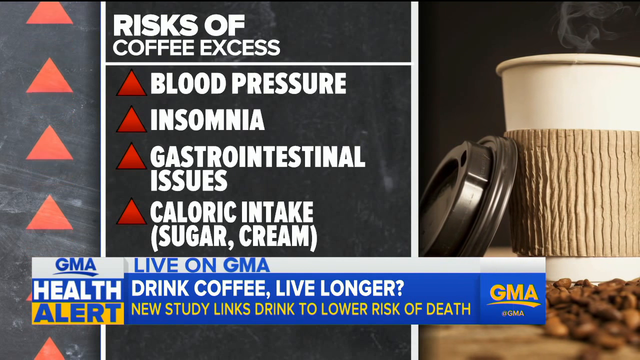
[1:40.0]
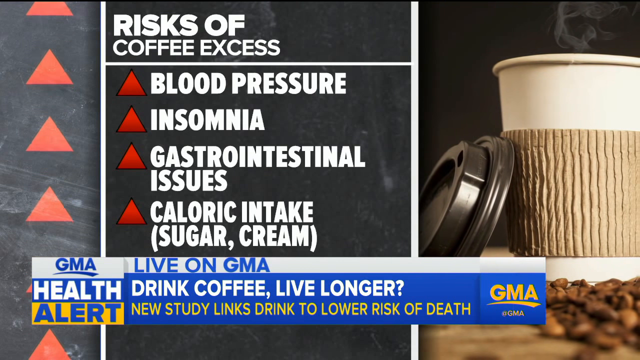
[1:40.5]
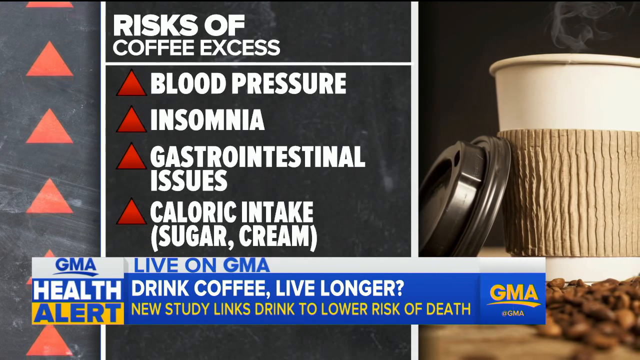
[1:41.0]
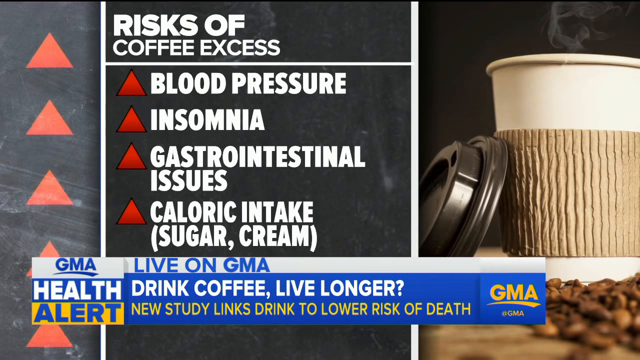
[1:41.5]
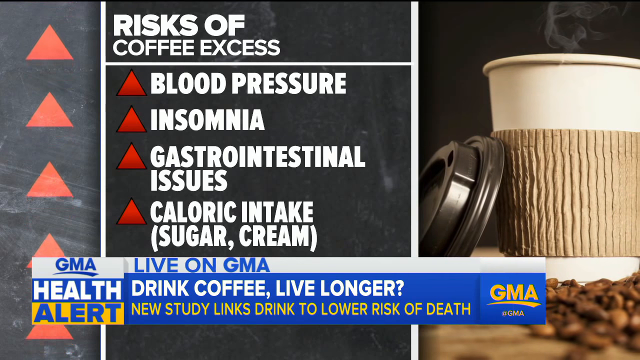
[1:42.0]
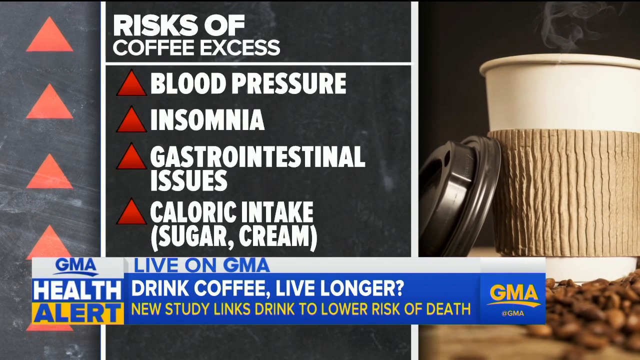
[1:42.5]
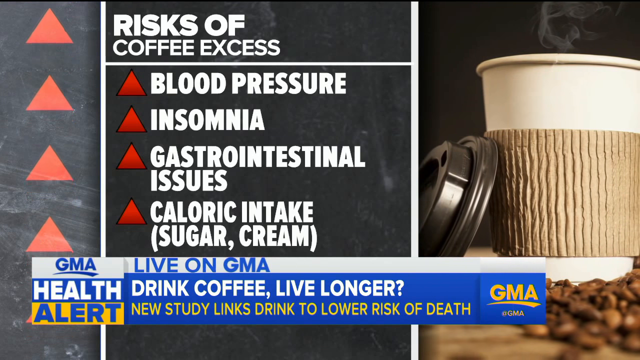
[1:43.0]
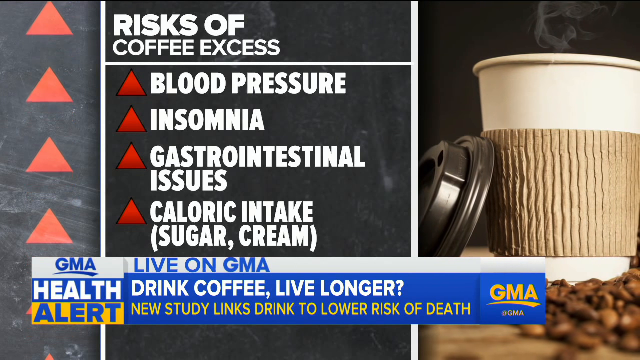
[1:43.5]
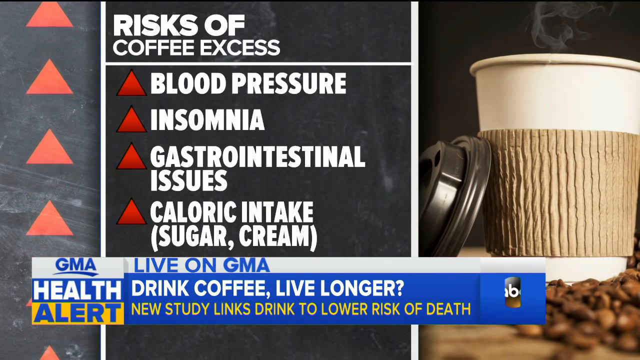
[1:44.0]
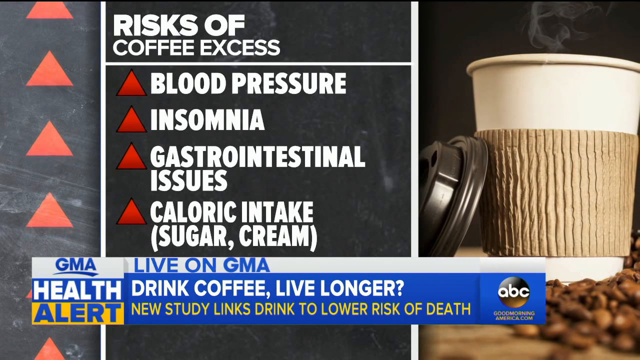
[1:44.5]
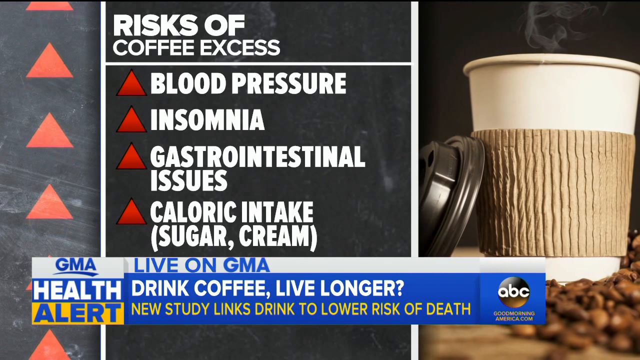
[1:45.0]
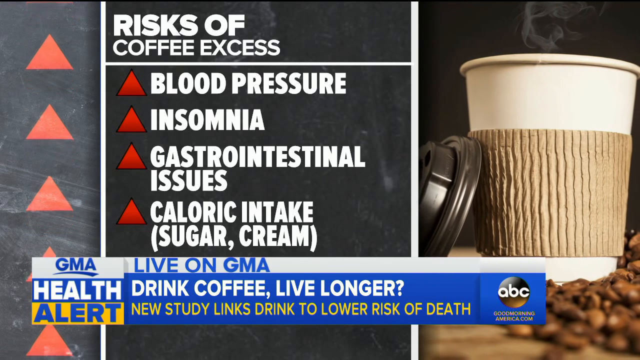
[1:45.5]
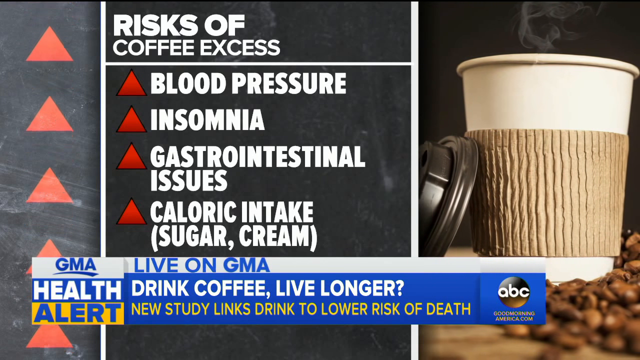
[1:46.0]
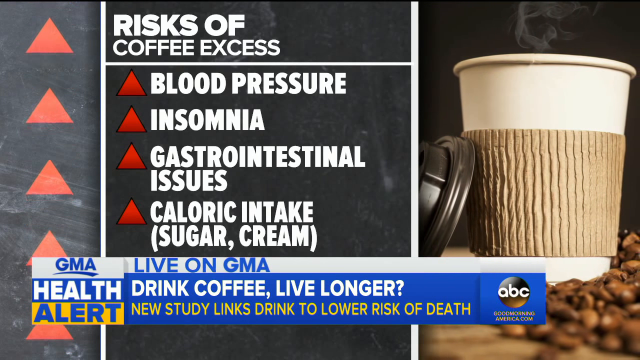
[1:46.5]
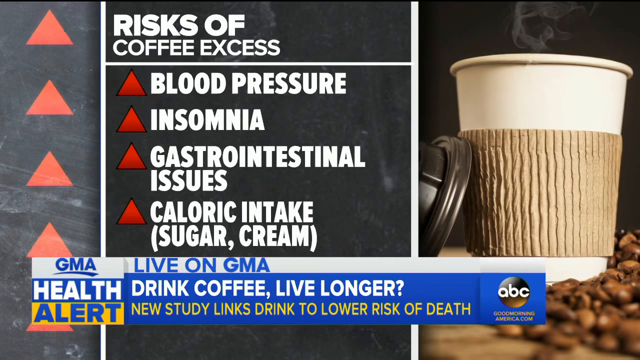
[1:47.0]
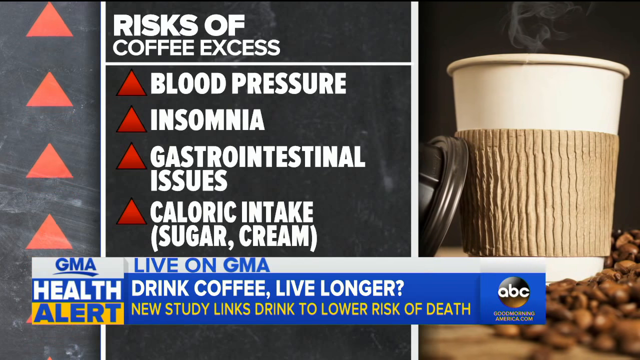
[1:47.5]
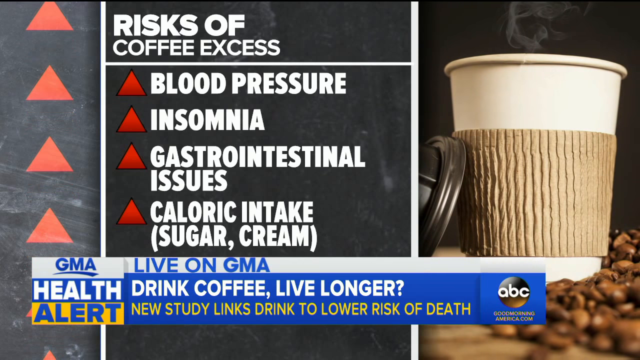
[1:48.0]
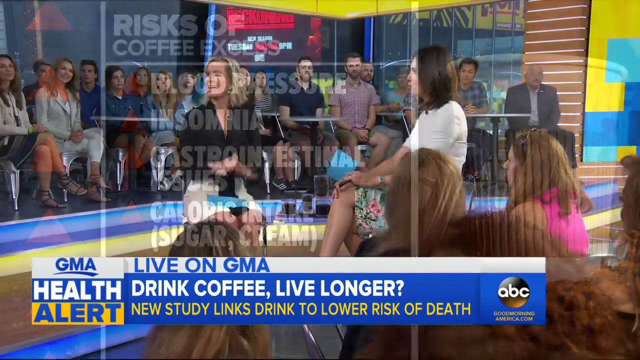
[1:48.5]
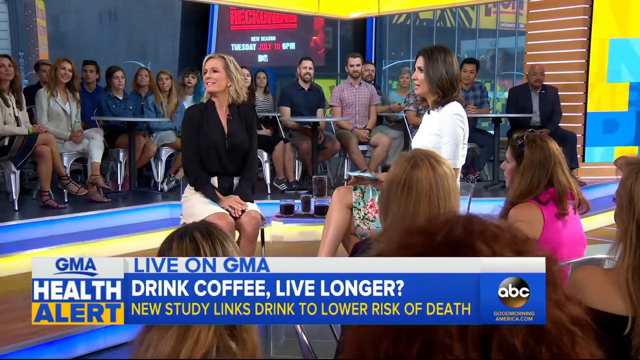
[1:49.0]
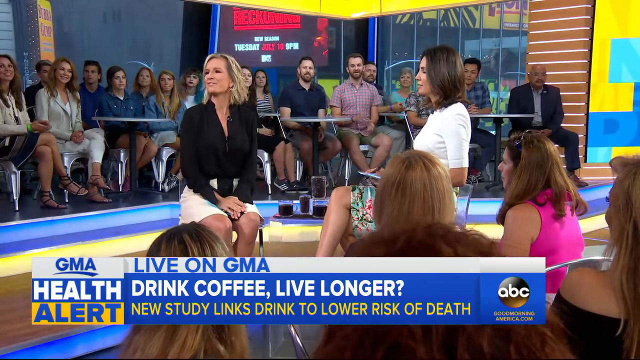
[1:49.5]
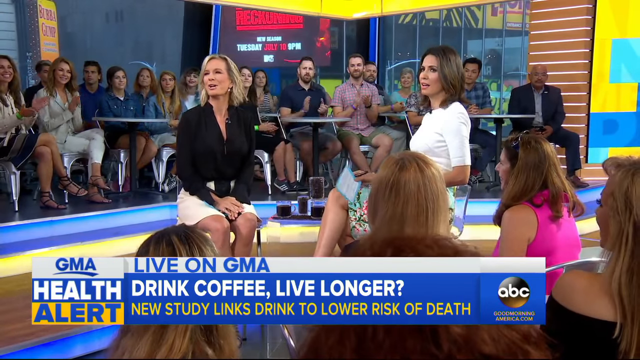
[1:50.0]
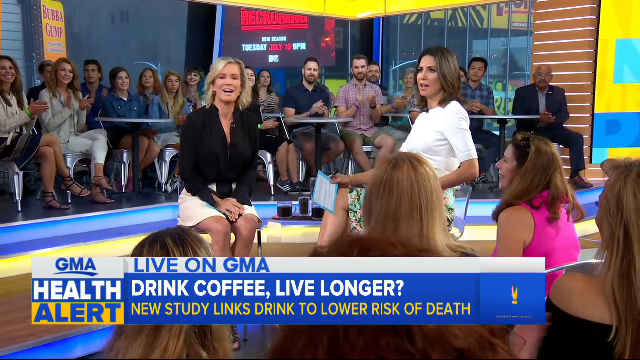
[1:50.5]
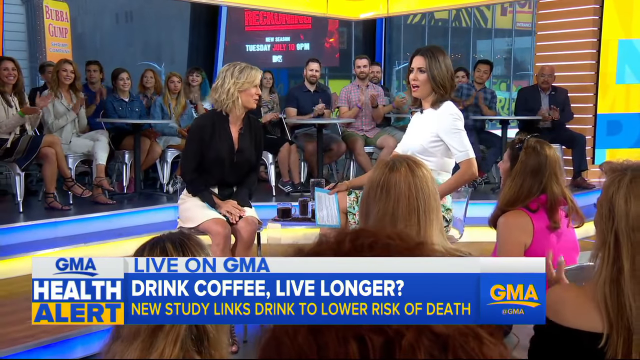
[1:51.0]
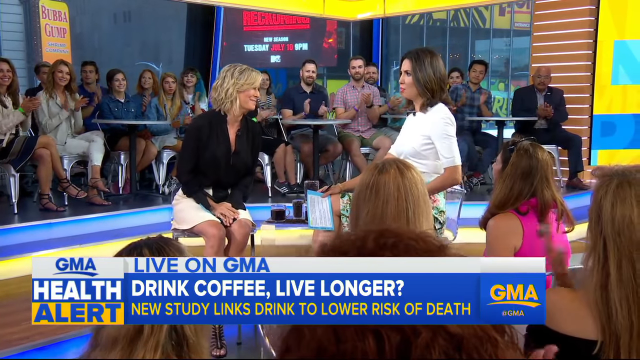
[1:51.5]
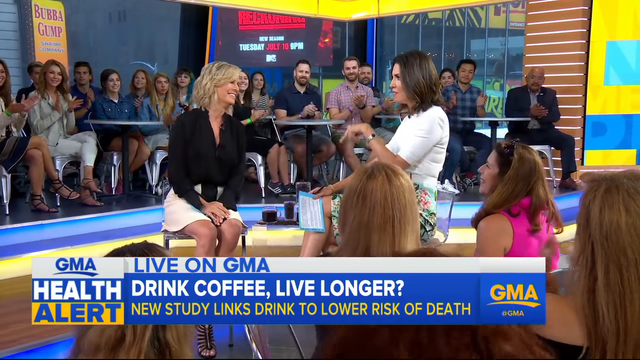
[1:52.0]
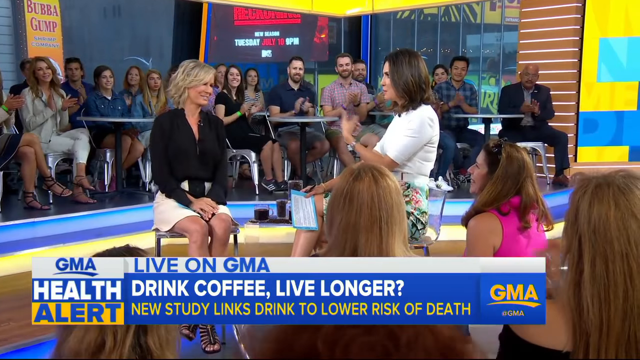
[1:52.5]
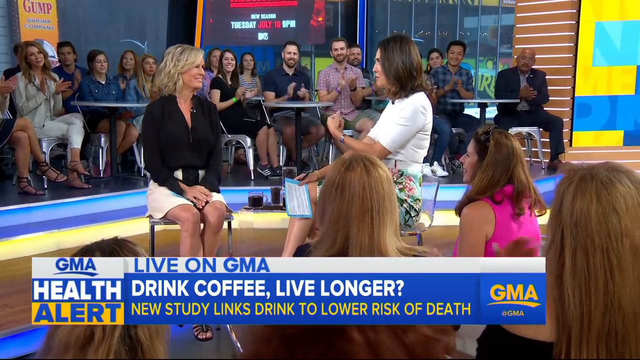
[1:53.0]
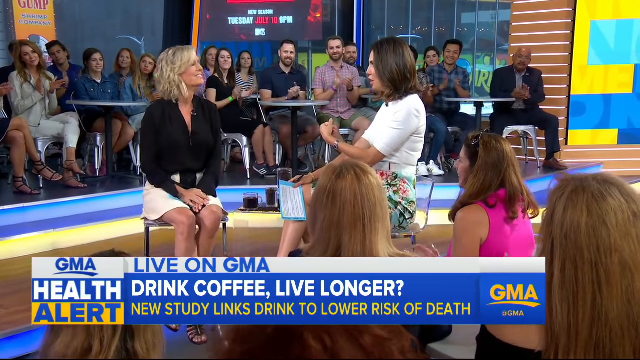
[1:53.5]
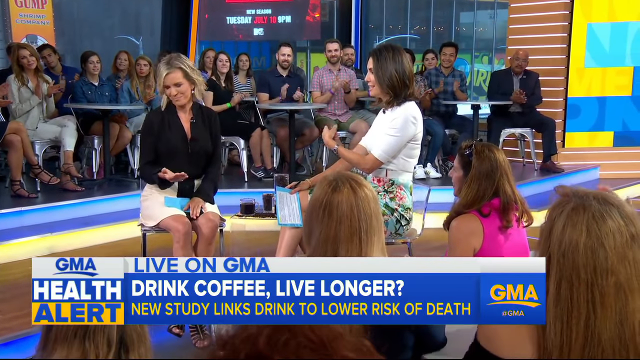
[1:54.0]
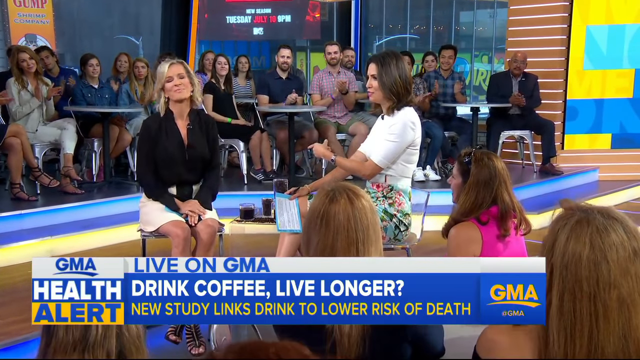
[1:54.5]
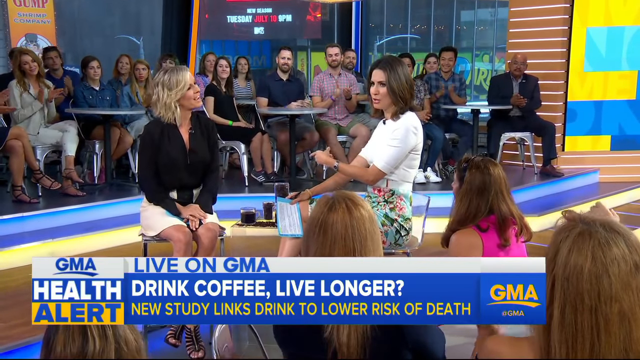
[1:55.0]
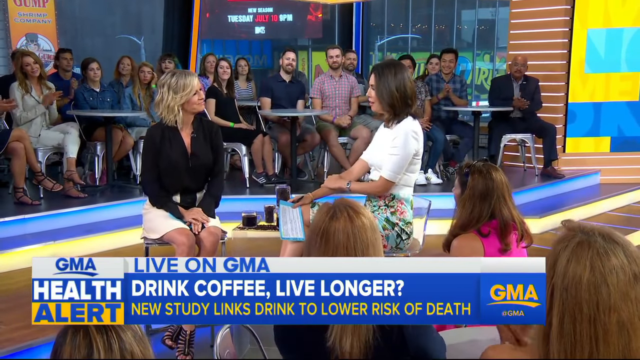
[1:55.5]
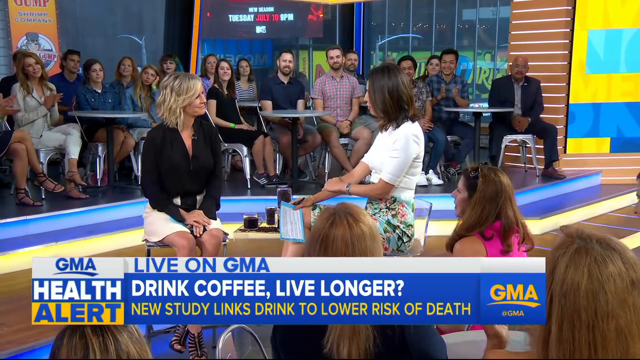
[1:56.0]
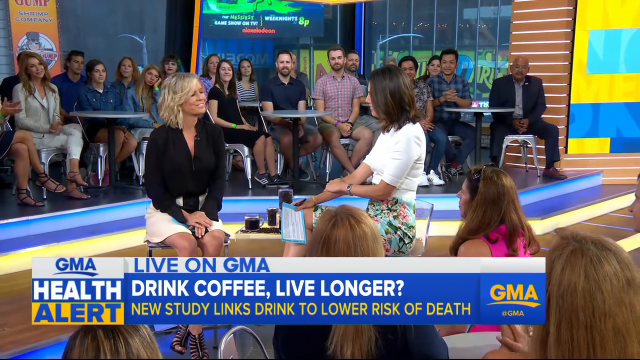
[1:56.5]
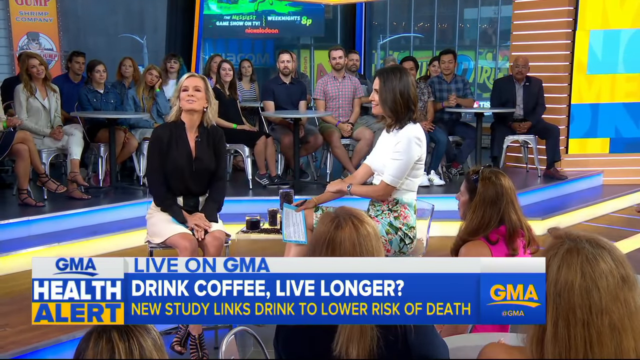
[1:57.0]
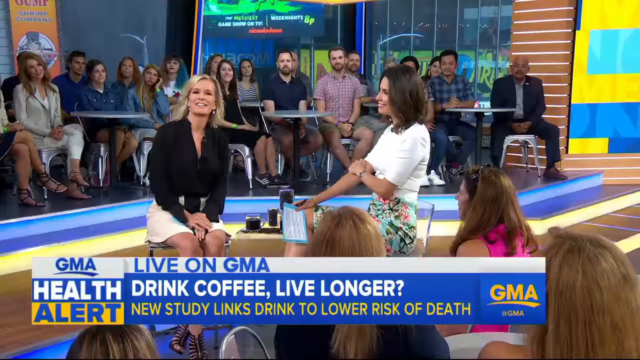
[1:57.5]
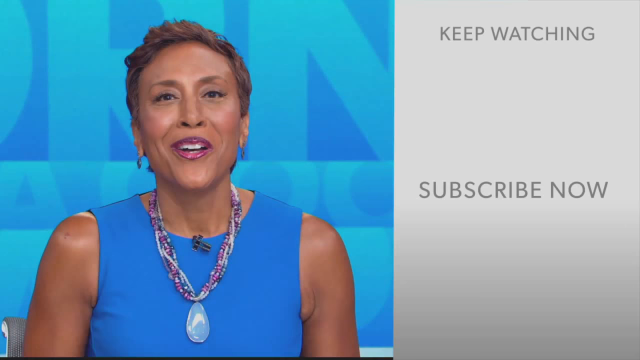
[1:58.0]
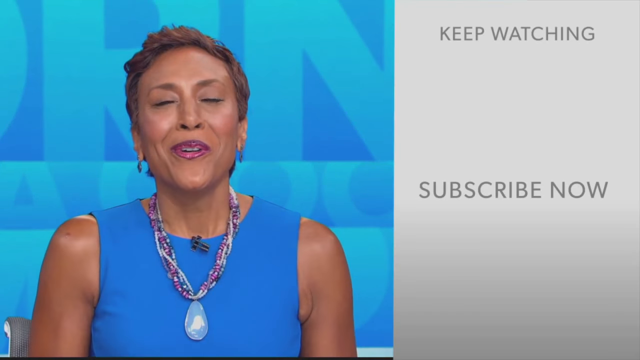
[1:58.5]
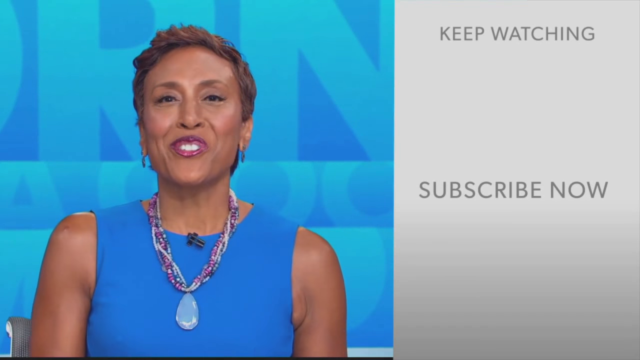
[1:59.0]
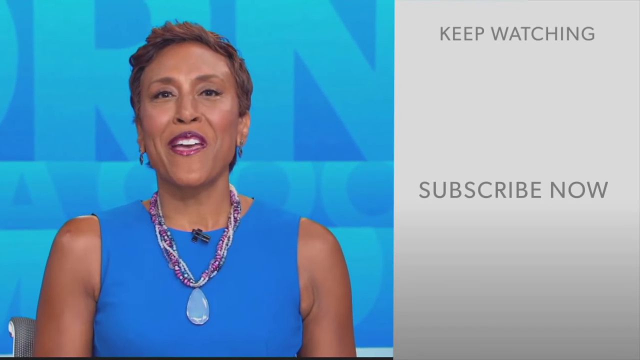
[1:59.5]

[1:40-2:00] In the background is the picture of the plastic cup of coffee, which moves toward where the risk of coffee excess is written. The camera shifts back to the presenter and Dr. Jennifer talking. After her presentation on the risks of coffee excess, the audience claps. She smiles, and the two laugh together, as if possibly sharing a joke, while the audience also laughs and smiles. Afterwards, a blue and gray background appears with a woman who has short hair and is not light-skinned, wearing a blue top or vest, a purple necklace and a microphone.